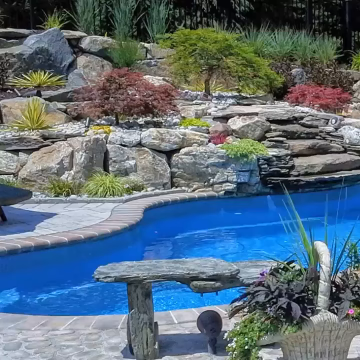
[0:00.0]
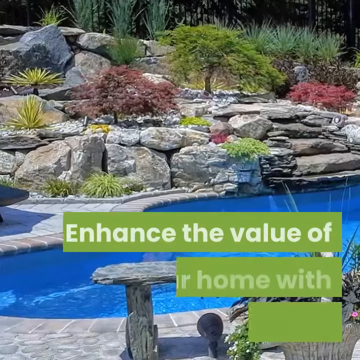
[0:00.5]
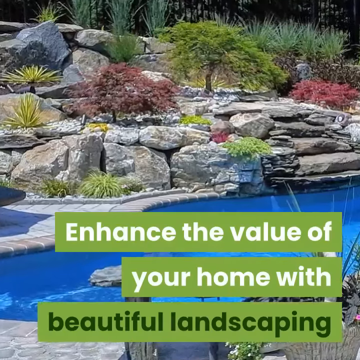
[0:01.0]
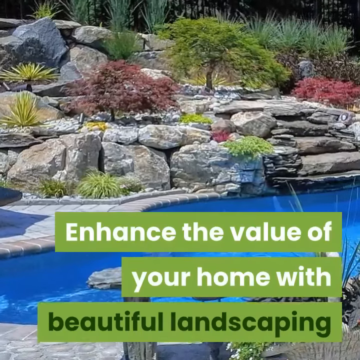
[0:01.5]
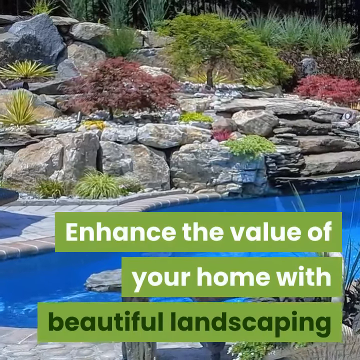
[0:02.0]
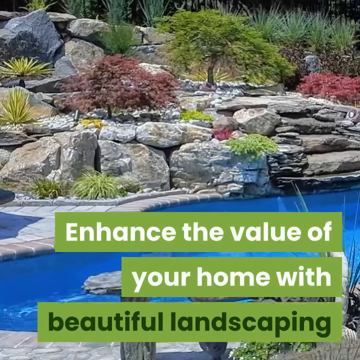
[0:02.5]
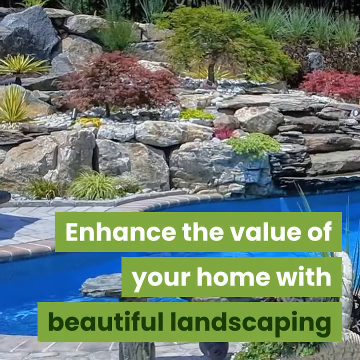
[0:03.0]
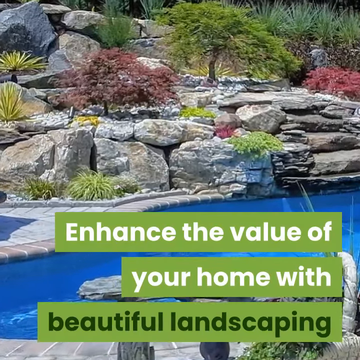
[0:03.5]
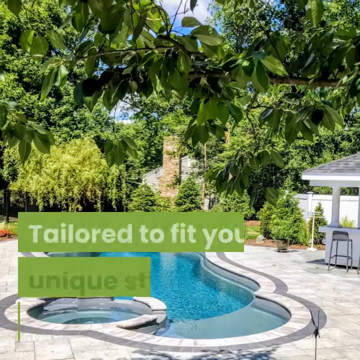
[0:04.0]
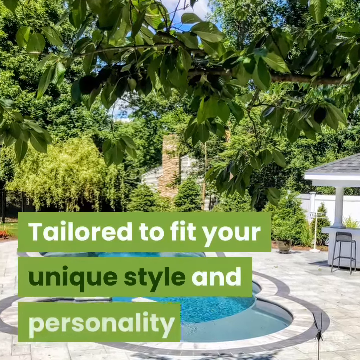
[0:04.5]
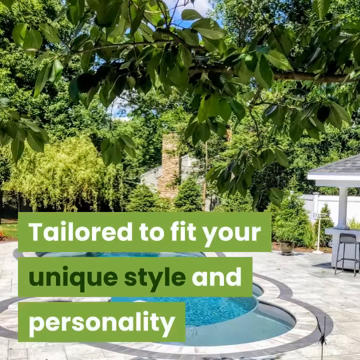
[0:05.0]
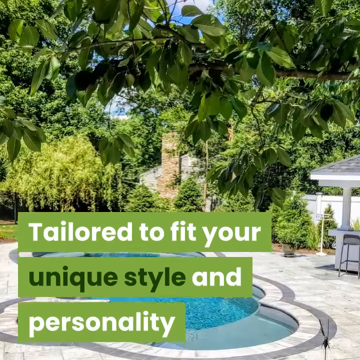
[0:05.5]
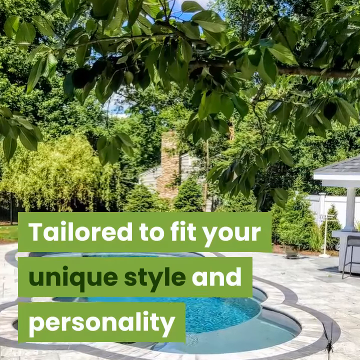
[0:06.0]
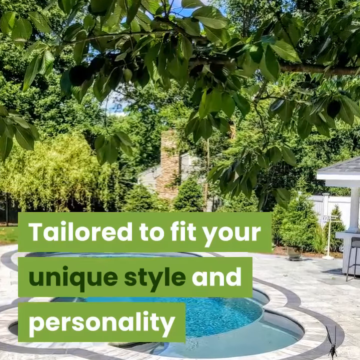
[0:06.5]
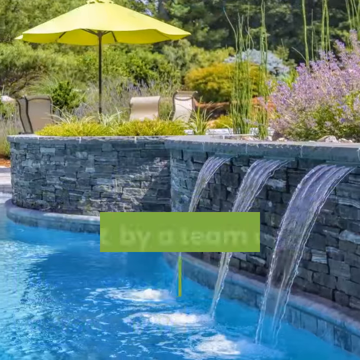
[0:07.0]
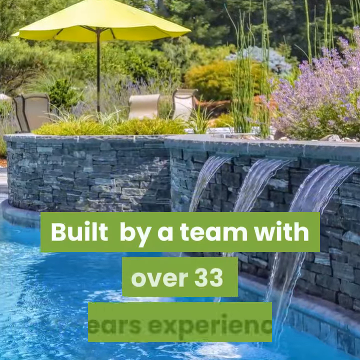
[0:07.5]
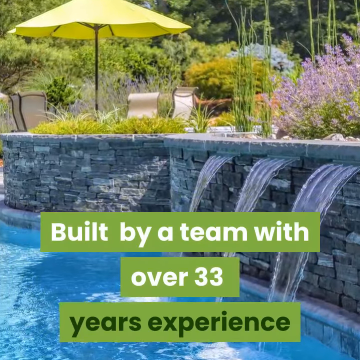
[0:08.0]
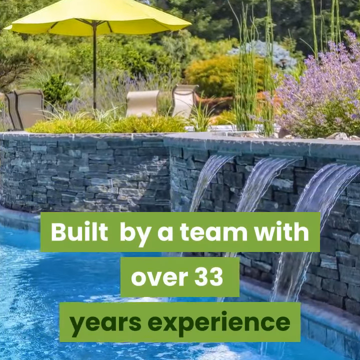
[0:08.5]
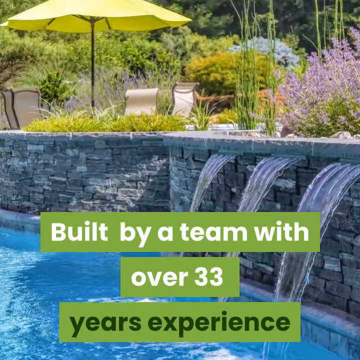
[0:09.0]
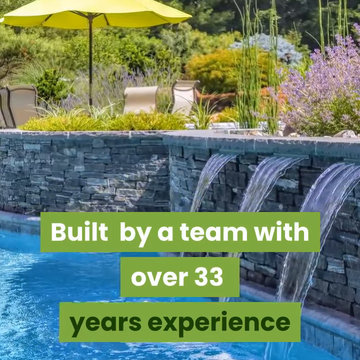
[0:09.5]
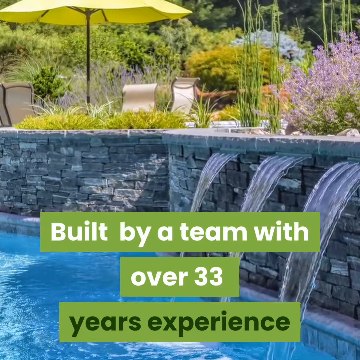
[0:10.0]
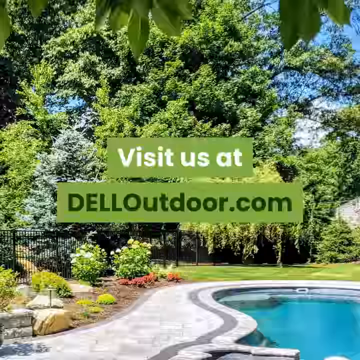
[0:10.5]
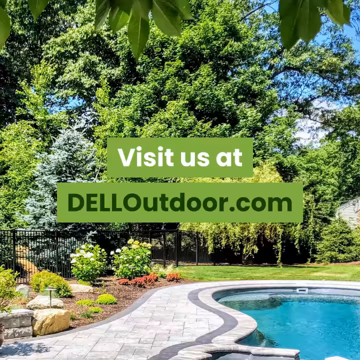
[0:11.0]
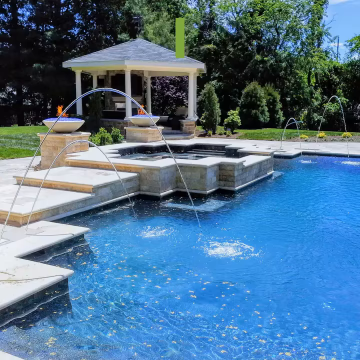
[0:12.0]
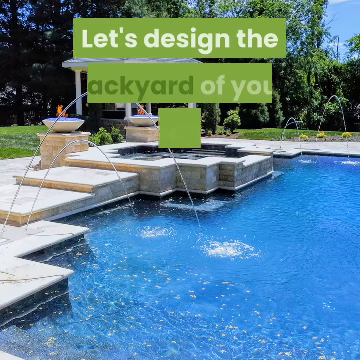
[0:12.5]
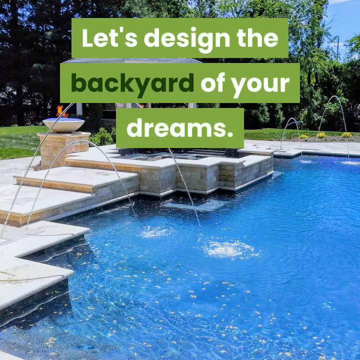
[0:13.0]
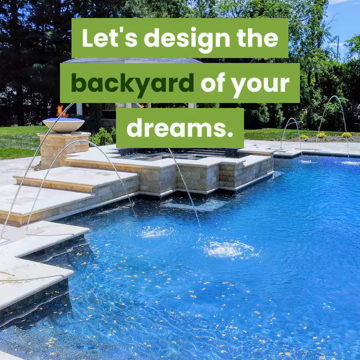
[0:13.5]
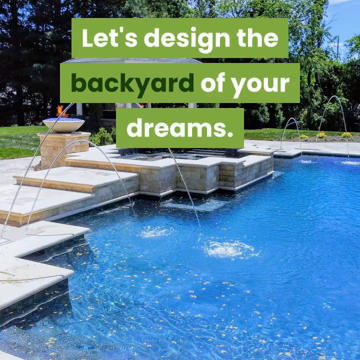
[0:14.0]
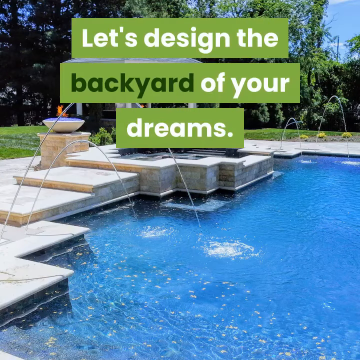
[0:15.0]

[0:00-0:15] The scene shows a pool that appears to be an in-ground pool, with rocks and plants along its side. On-screen text reads "enhance the value of your home with beautiful landscaping," with the focus on the landscaping around the pool. The view then pans out to reveal large amounts of greenery, including what look like vines on brick, along with lots of hanging greenery and trees. Text then reads "built by a team with over 33 years of experience." In the lower half of the picture, from about halfway down, is the pool, with water flowing into it from a waterfall-type design. The upper half, from midway up, is filled with greenery and purple flowers, along with a beach umbrella and some lounge chairs. The video continues to show different angles and views of the pool and the greenery surrounding the area.